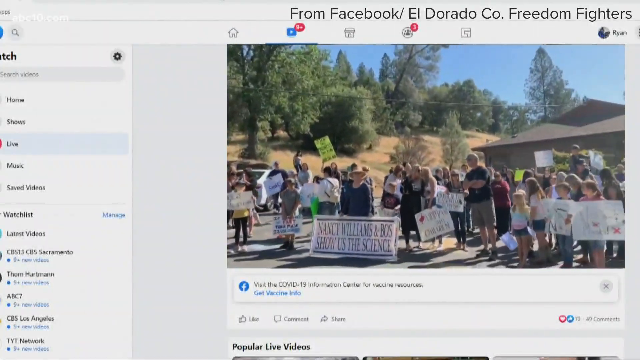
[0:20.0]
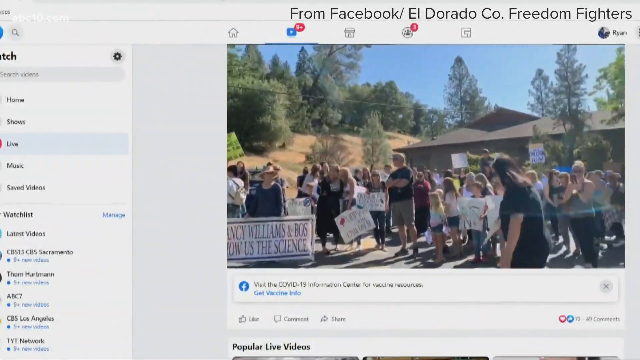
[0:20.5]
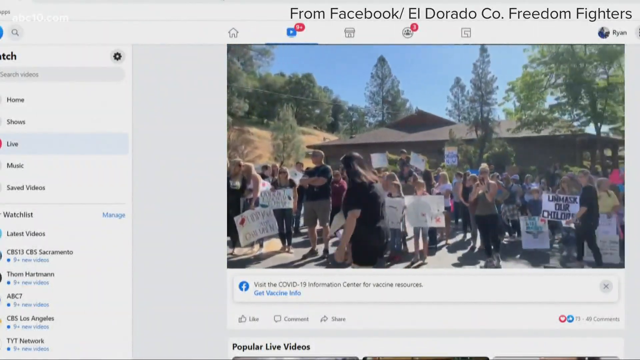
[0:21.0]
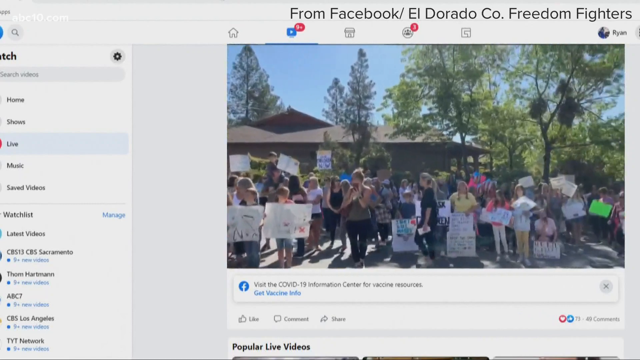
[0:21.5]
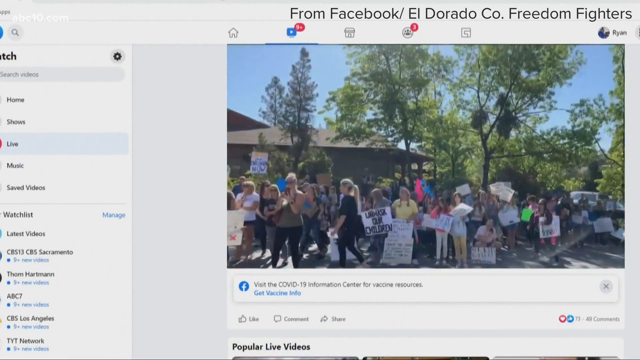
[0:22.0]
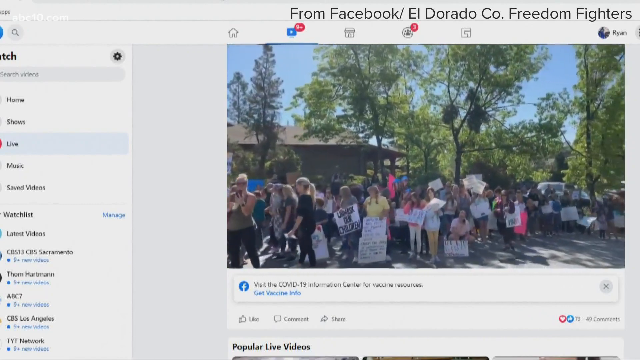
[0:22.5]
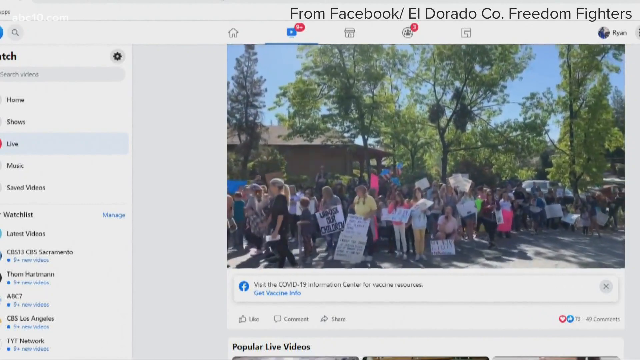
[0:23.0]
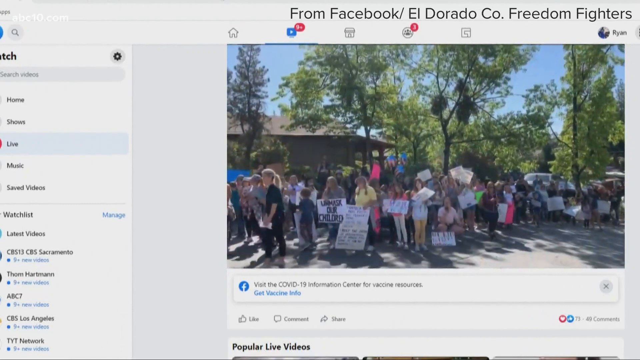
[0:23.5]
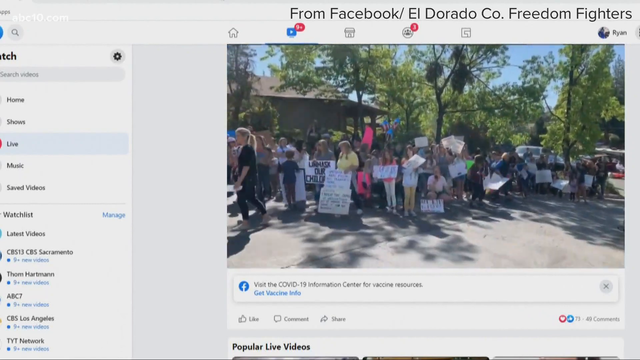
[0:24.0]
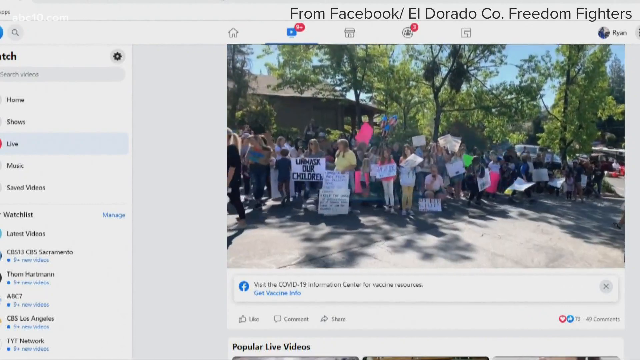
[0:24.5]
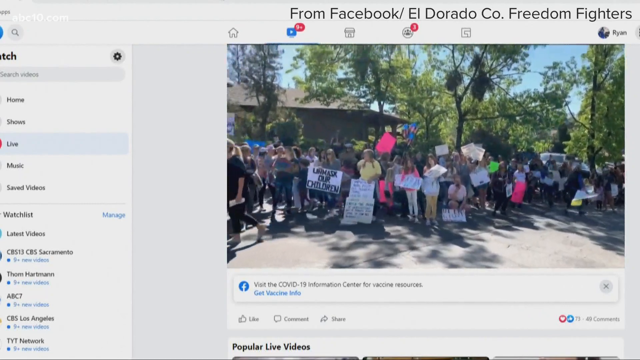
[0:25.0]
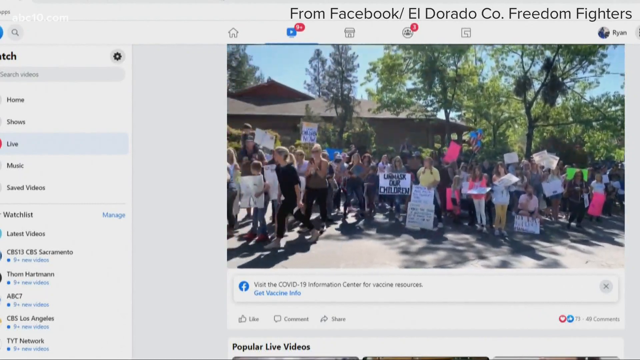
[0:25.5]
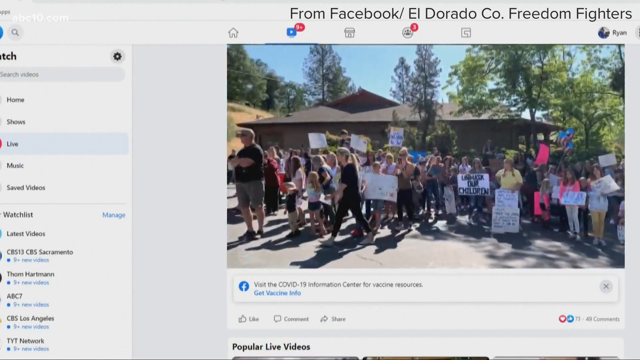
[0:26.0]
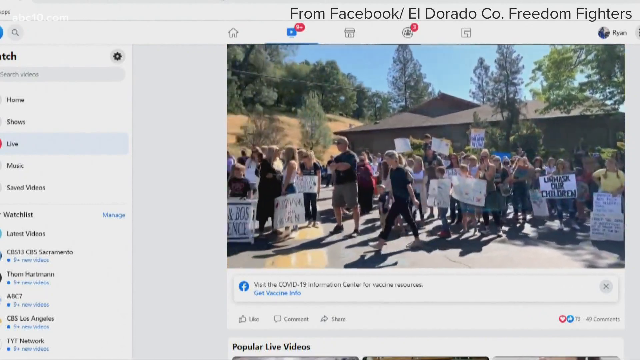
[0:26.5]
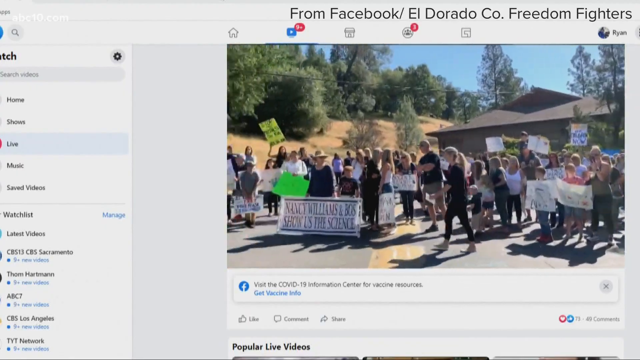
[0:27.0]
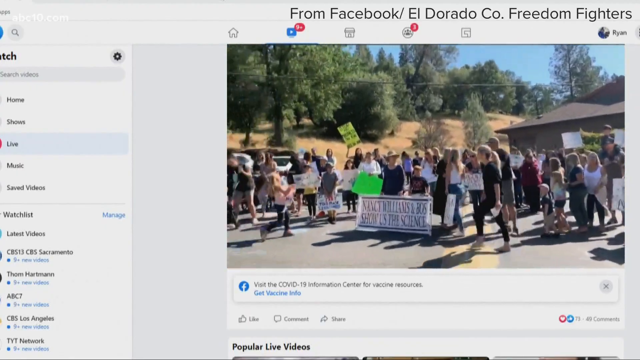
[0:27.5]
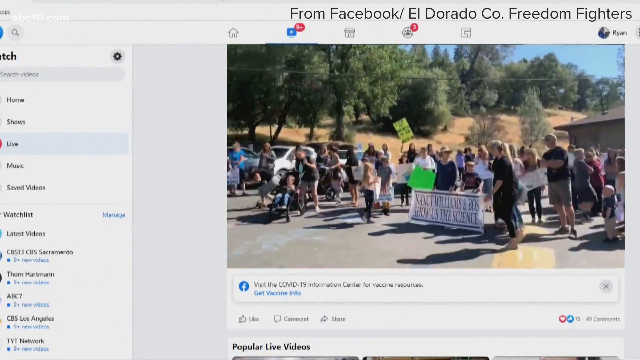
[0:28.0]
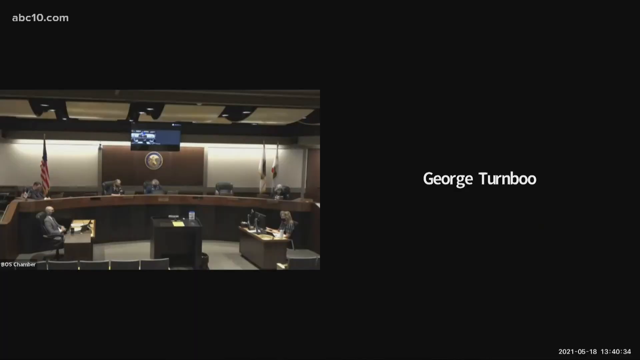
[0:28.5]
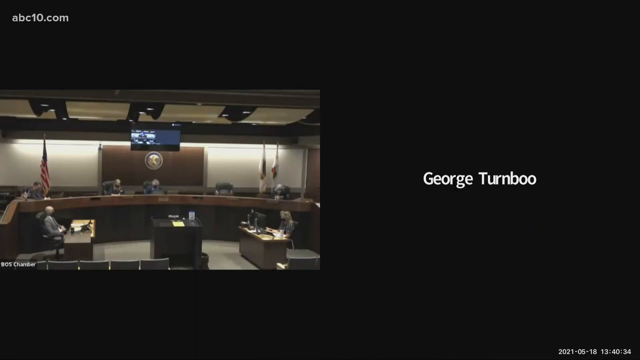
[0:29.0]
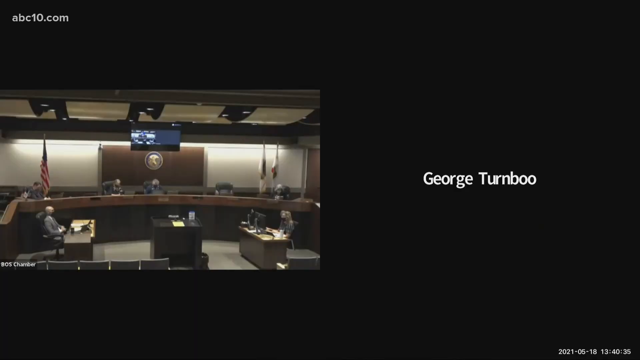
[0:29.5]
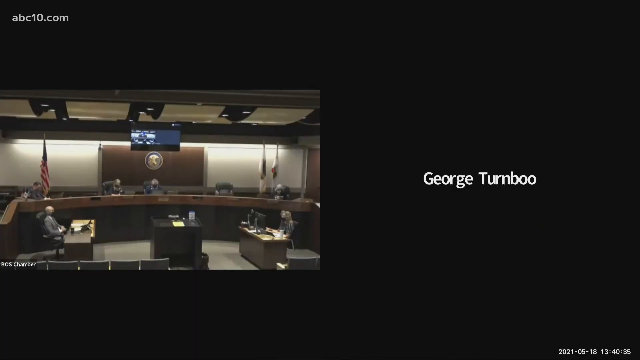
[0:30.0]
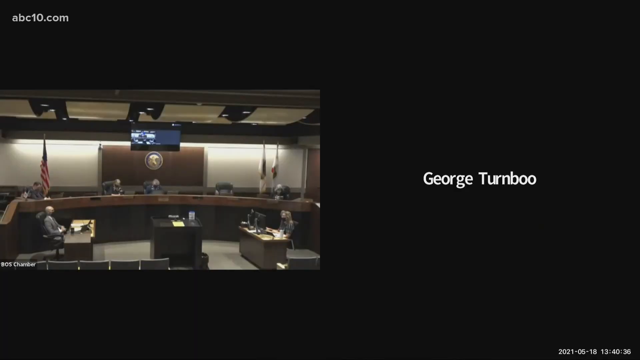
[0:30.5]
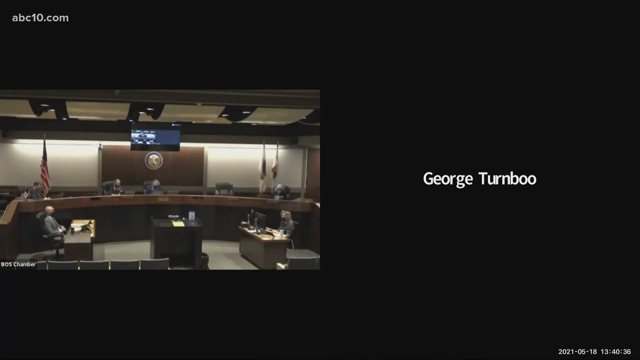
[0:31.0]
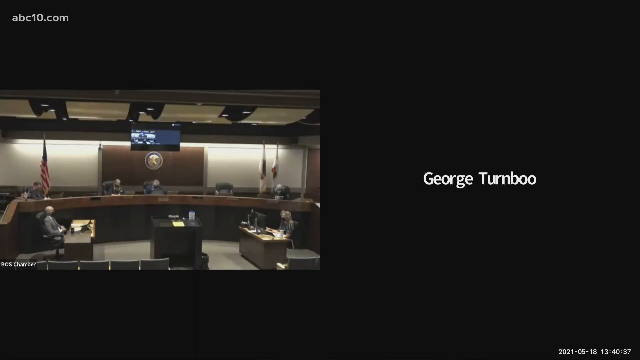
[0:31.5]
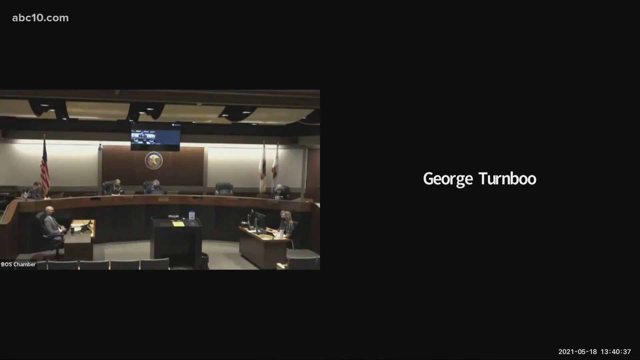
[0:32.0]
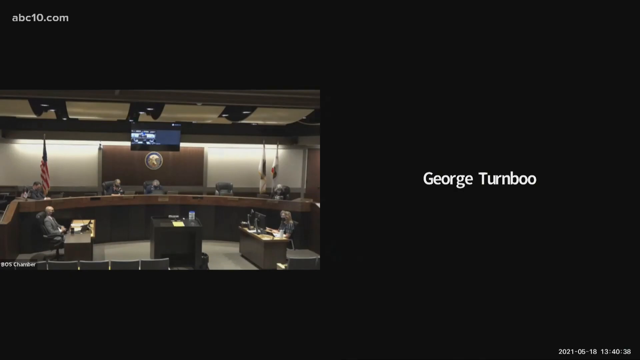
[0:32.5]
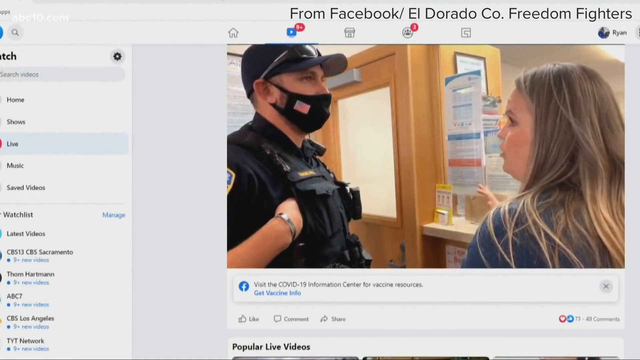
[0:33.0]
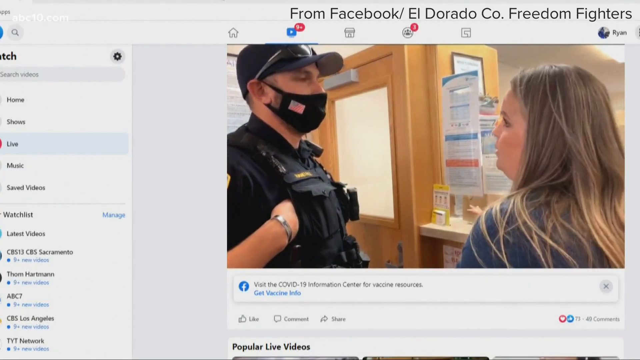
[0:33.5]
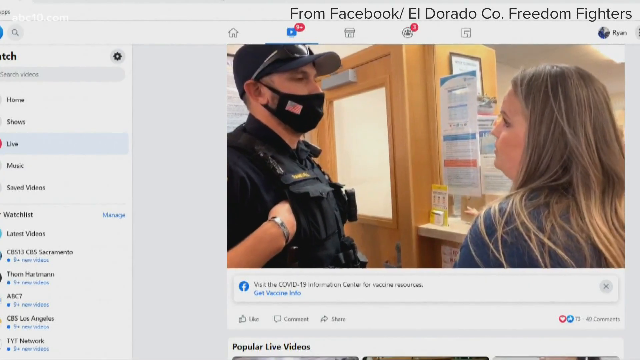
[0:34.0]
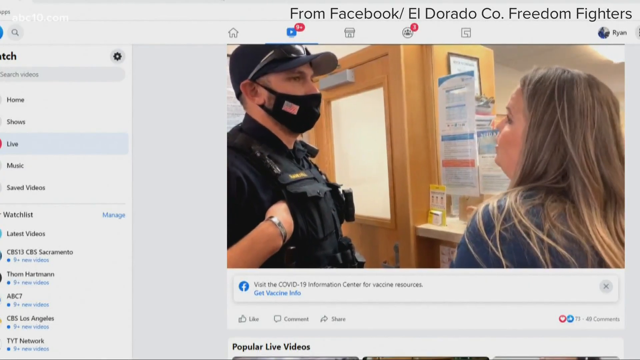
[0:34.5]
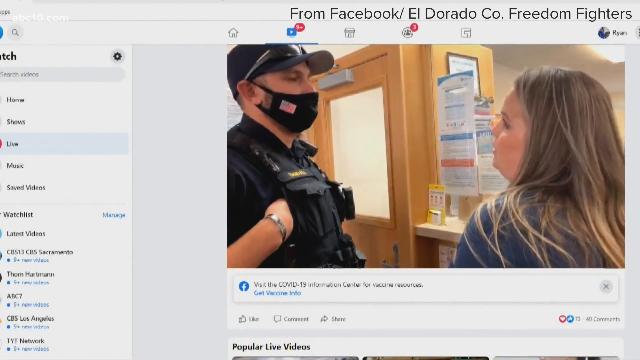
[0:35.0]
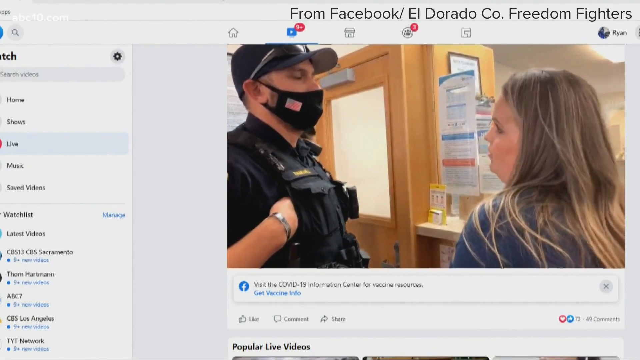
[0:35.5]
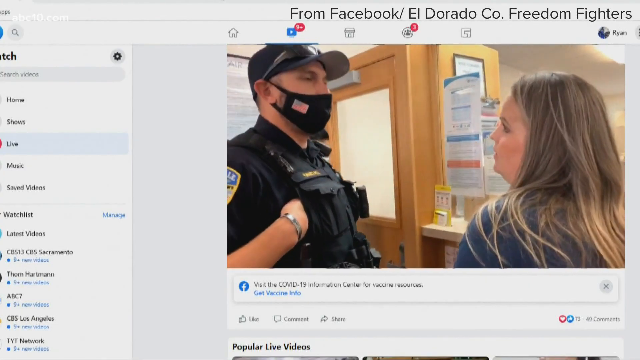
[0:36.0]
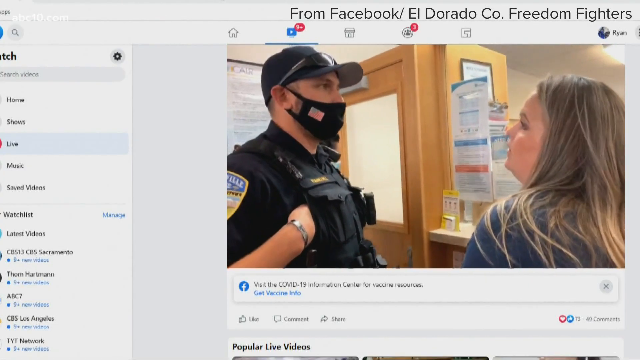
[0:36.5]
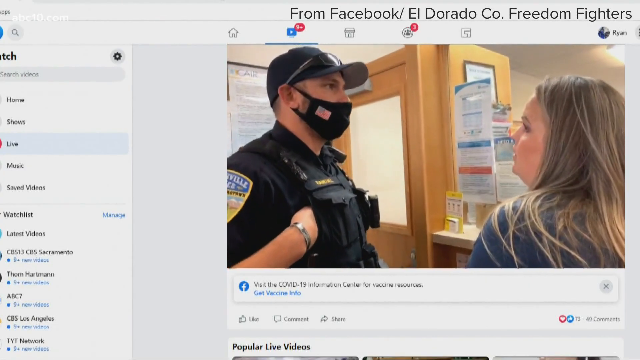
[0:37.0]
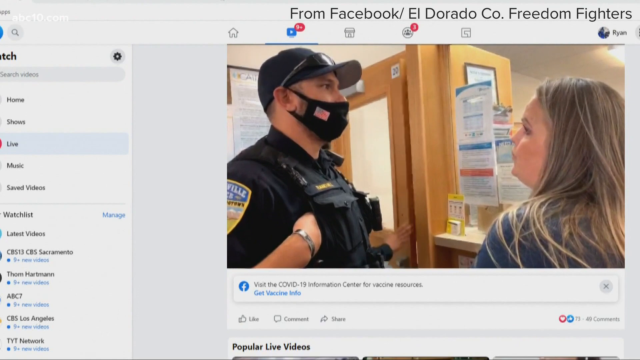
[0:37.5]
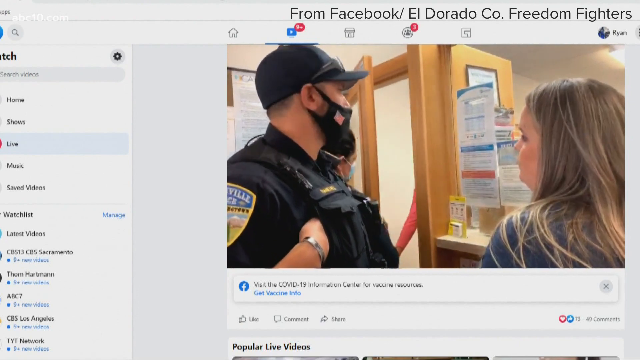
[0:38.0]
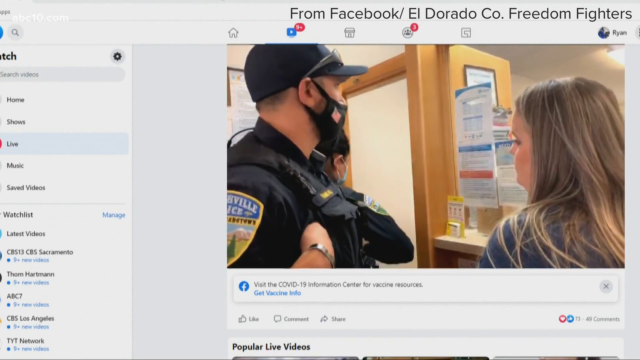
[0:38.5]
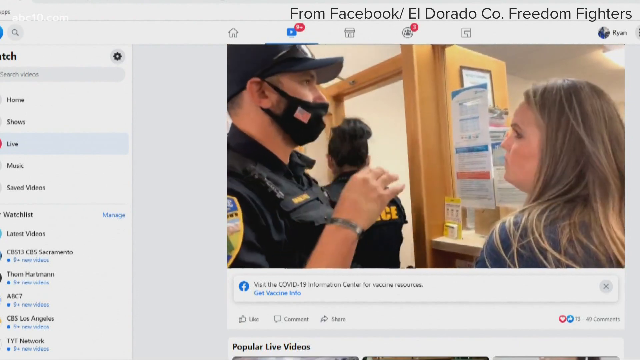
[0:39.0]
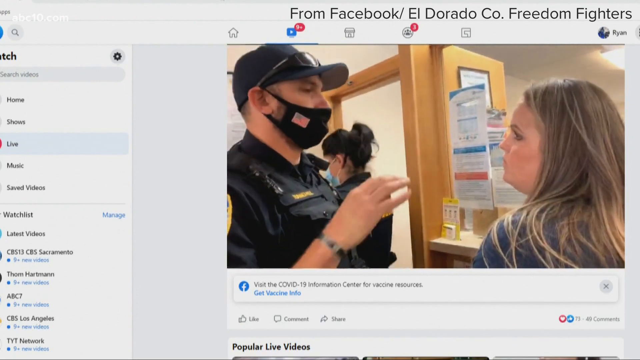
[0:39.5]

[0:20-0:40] A new shot shows kids and adults outside a building, apparently protesting, with the kids holding signs. A brown building is in the background, along with trees and a hill with brown grass. The shot pans over to show all of the people outside protesting. This is still a video playing on the Facebook page; at the top it says "from Facebook / El Dorado Company Freedom Fighters," and various Facebook icons appear at the top of the playing video. On the right-hand side is a profile picture labeled "Ryan," though the person in the picture cannot be made out. The video then cuts to a black screen with "George Turnbu" on the right and, on the left, an image of a masked police officer talking to a long-haired woman to his right. Another police woman goes inside a door.